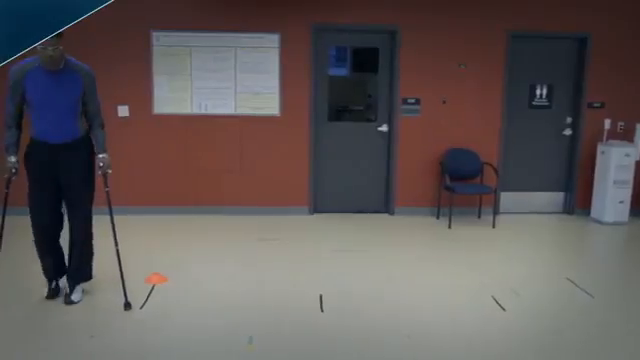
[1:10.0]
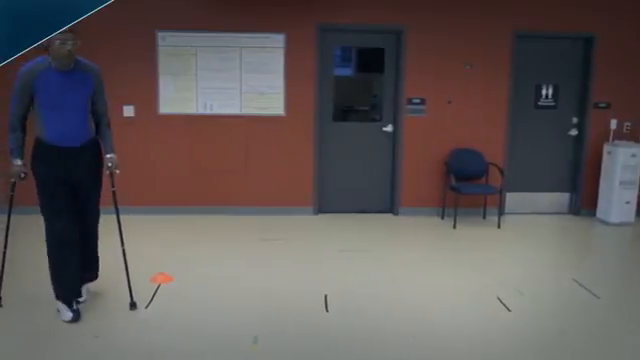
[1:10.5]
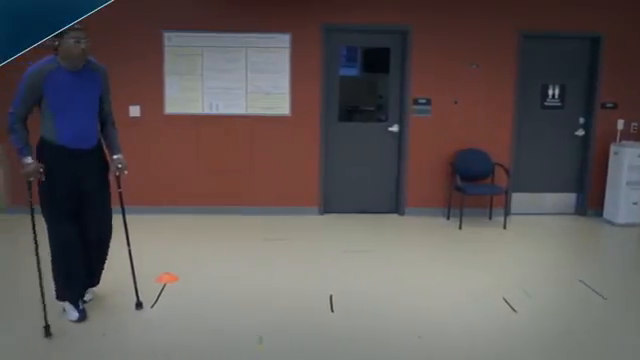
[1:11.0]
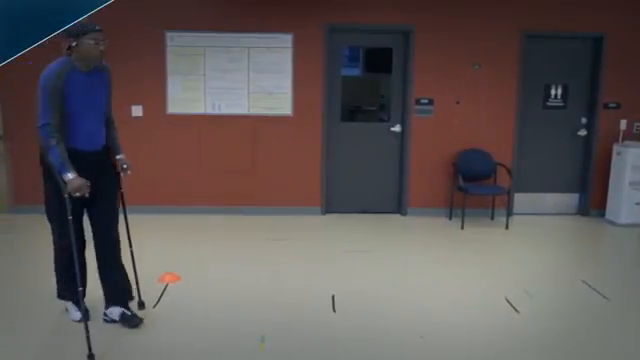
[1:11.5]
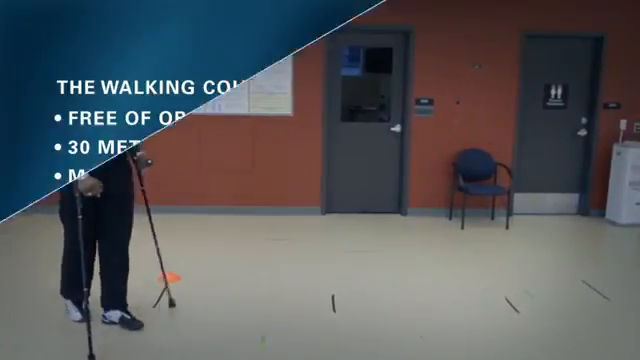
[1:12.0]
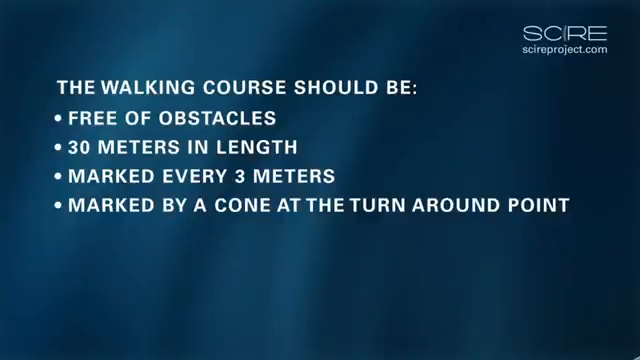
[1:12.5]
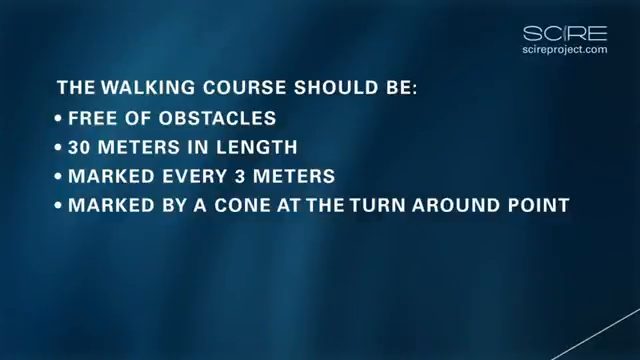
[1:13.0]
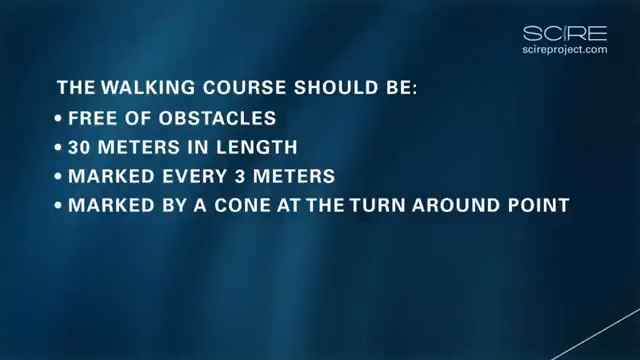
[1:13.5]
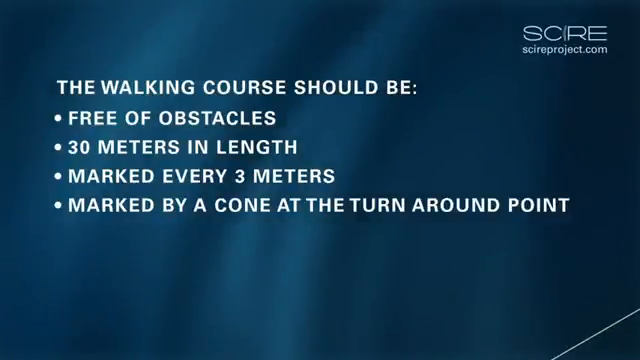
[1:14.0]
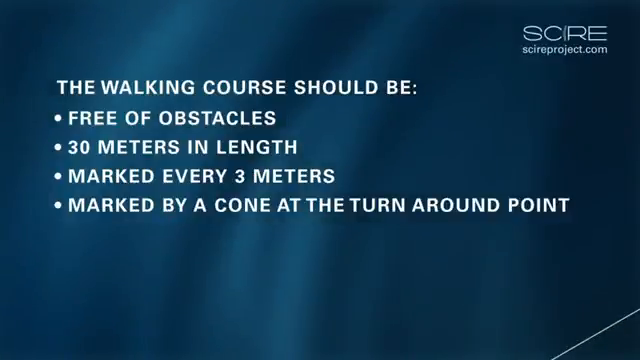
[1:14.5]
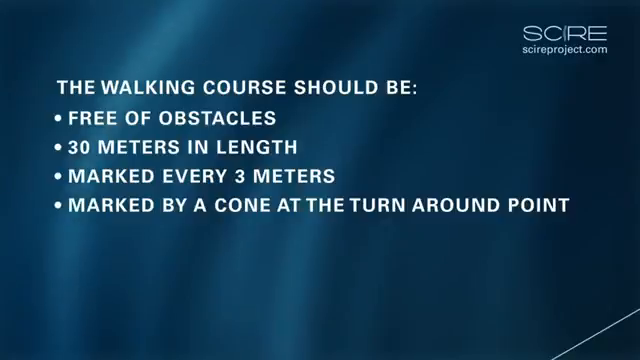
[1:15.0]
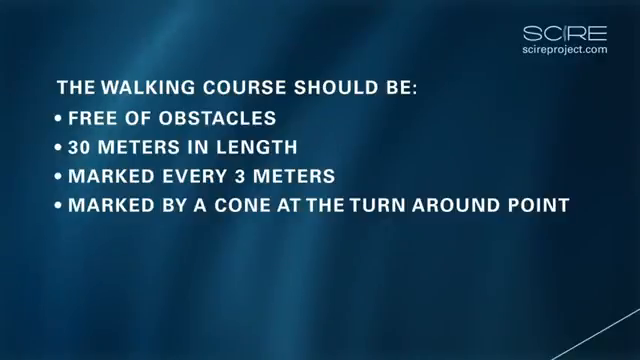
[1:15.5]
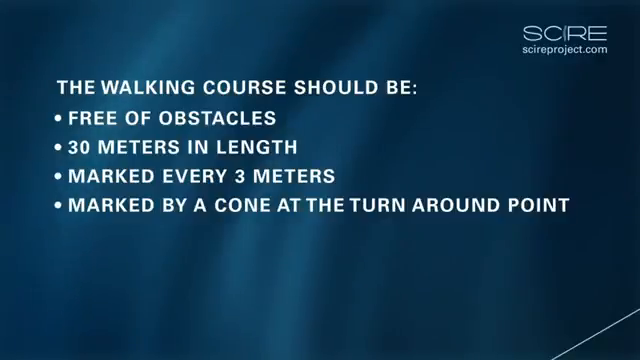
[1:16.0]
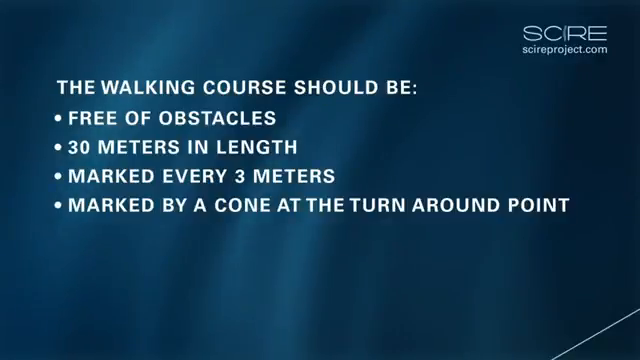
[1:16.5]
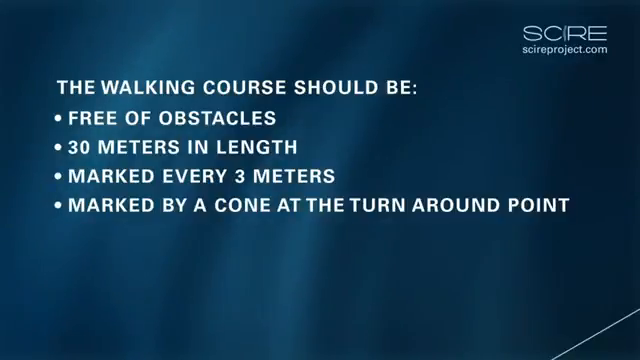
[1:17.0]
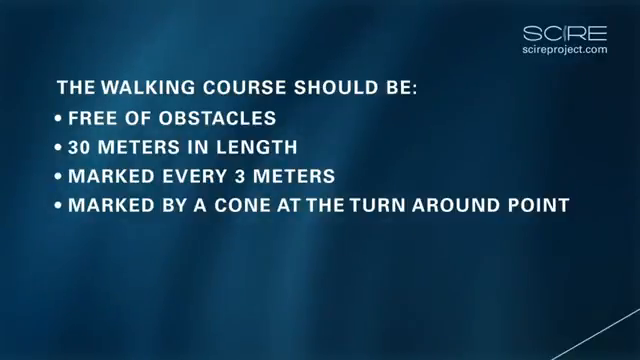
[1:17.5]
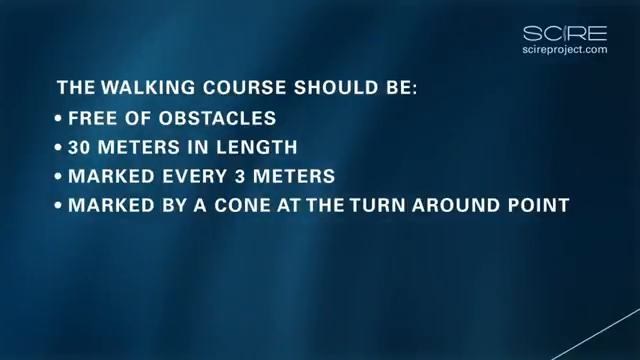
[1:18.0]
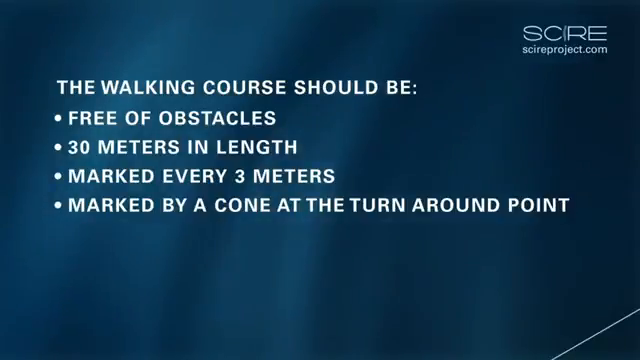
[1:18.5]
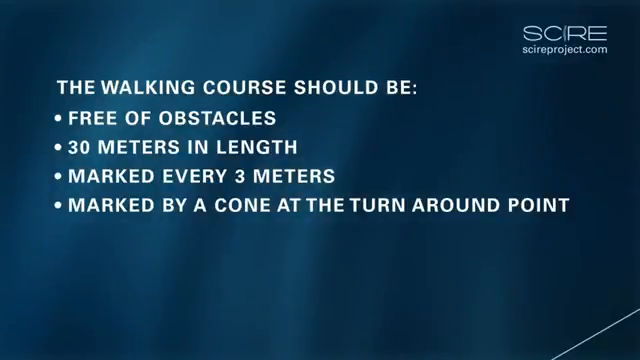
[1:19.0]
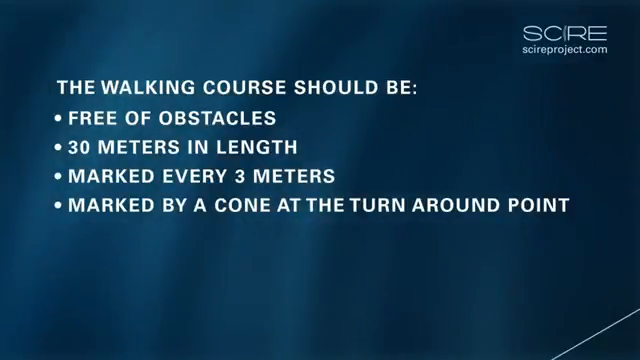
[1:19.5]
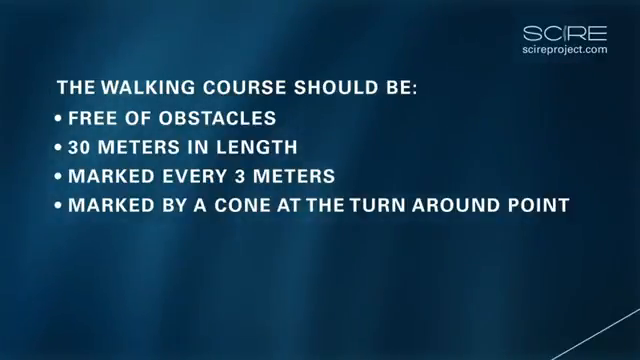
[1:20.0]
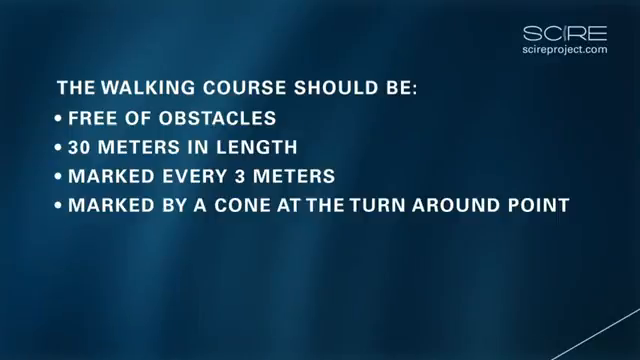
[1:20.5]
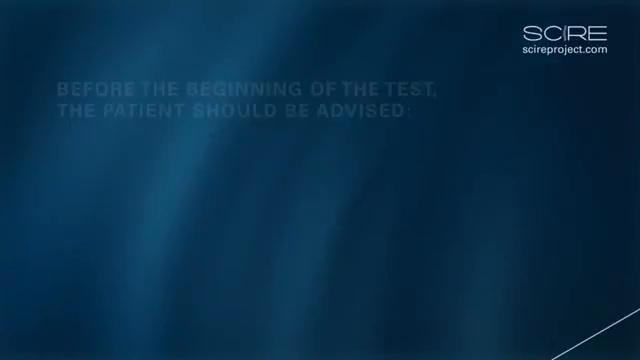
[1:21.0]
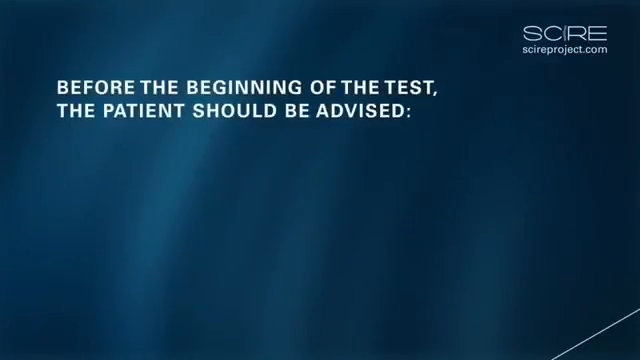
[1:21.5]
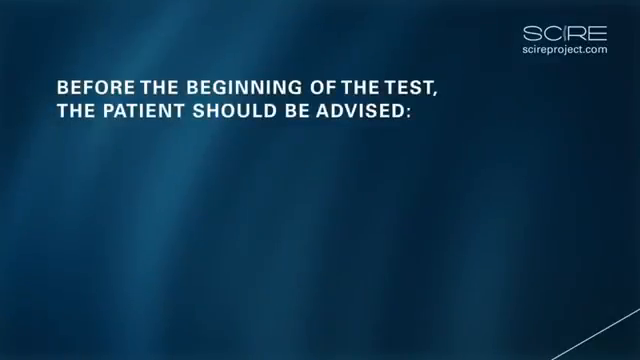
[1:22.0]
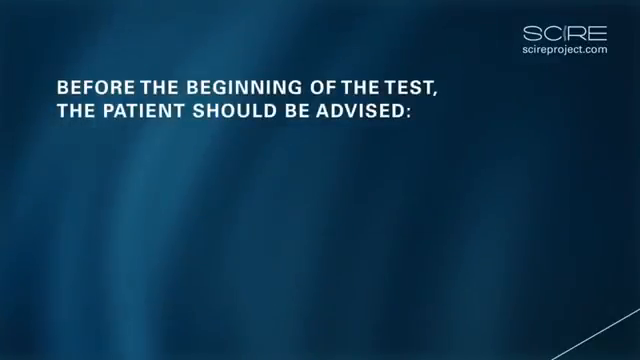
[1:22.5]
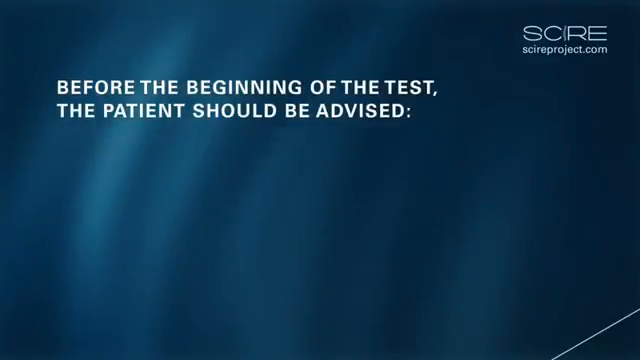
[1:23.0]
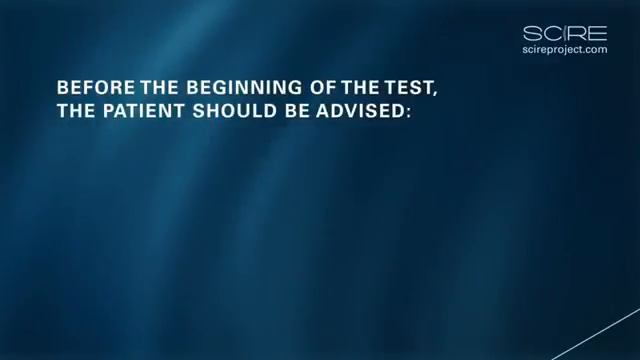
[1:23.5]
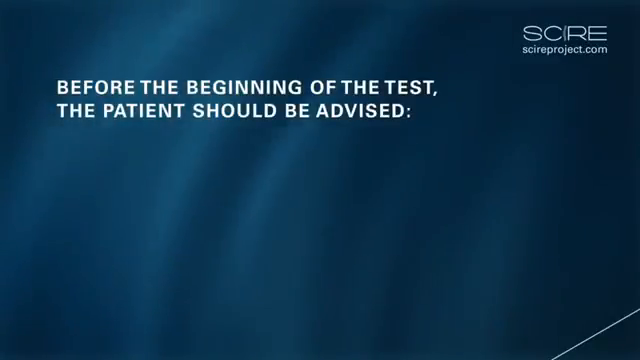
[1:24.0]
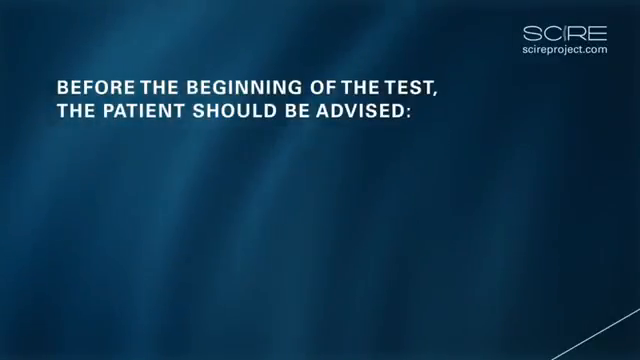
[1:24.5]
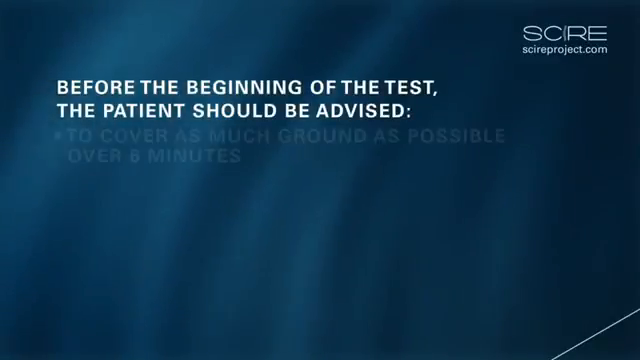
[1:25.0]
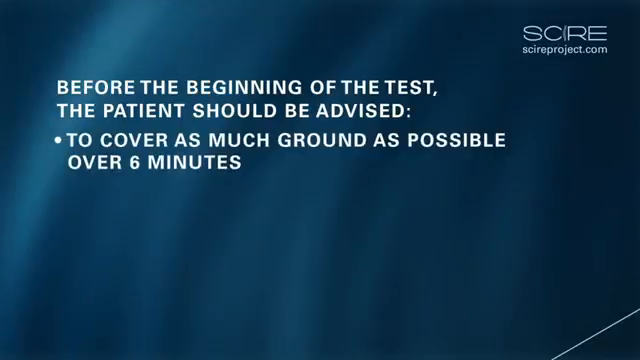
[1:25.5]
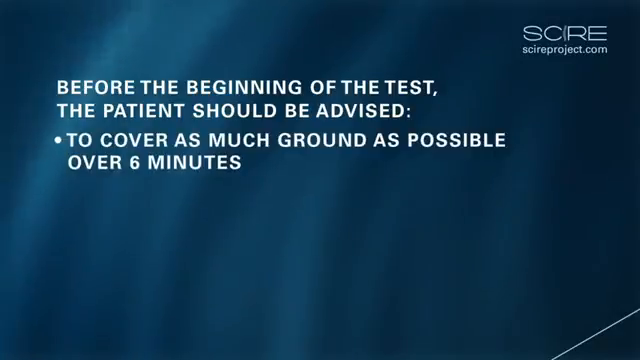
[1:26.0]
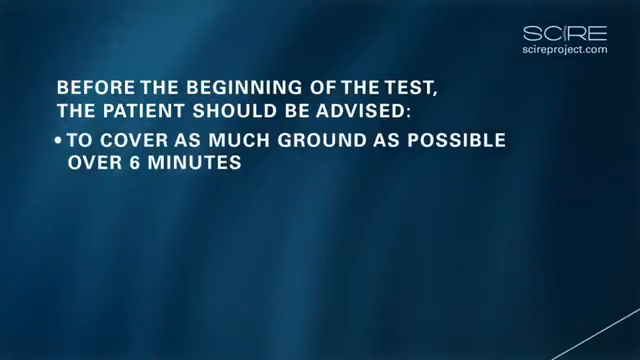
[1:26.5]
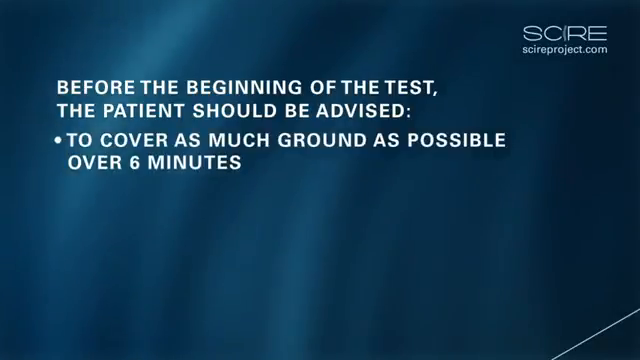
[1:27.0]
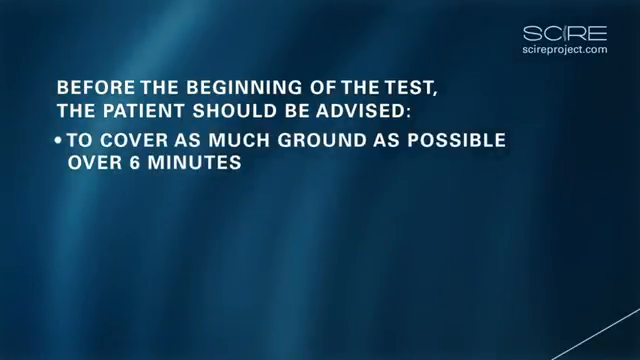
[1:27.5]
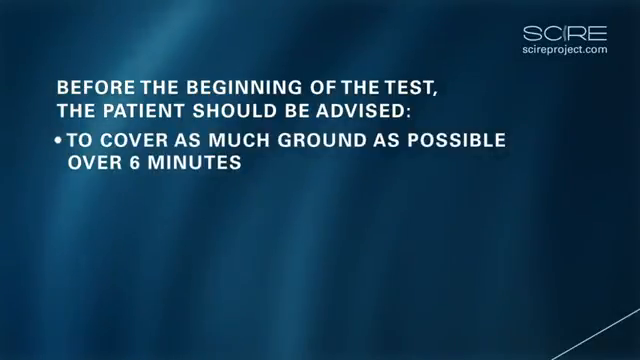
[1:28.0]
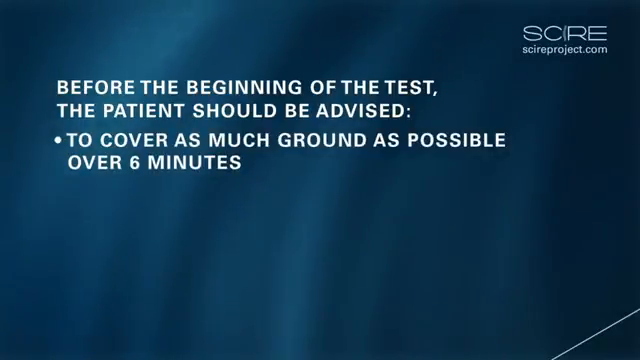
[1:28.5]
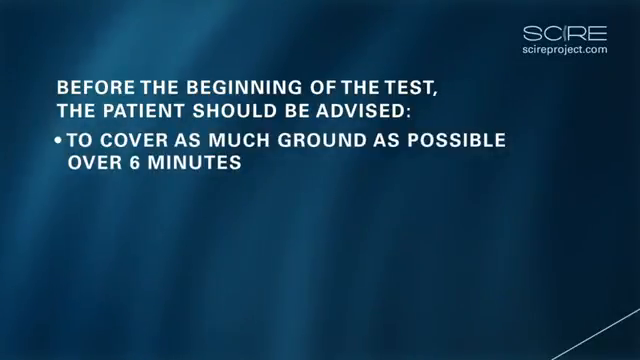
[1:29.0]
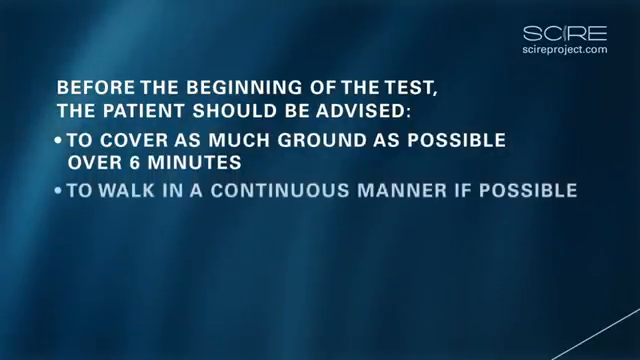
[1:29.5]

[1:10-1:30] The man walks back from the left of the screen to the right. The video then cuts to text on a dark blue background that looks a little like northern lights, reading "the walking course should be free of obstacles, 30 meters in length, marks every three meters, marks by a cone at the turnaround point", repeating the earlier information. This remains for 7 seconds, and then the text reads "Before the beginning of the test, the patient should be advised:" followed by "to cover as much ground as possible over six minutes" and "to walk in a continuous manner if possible", shown as bullet points.